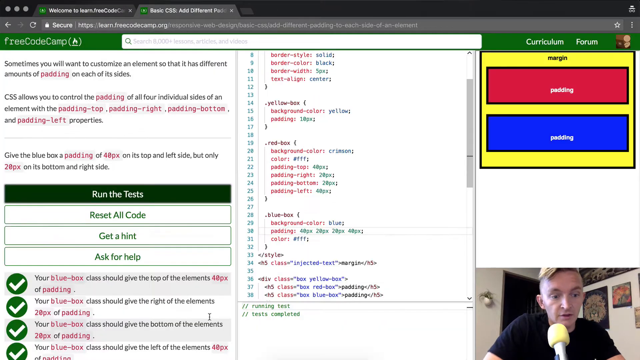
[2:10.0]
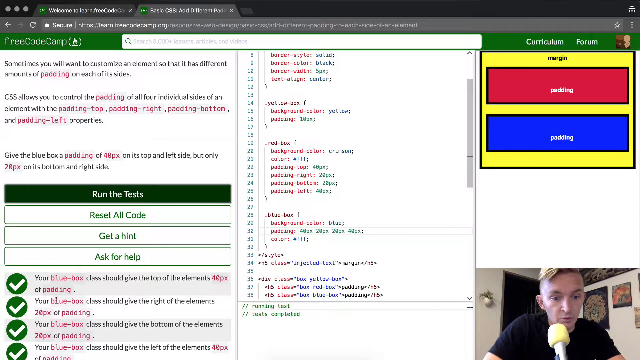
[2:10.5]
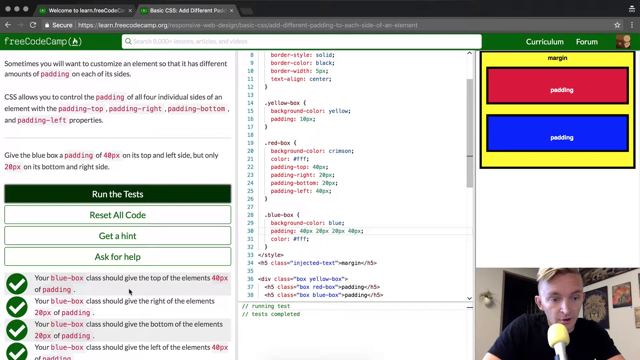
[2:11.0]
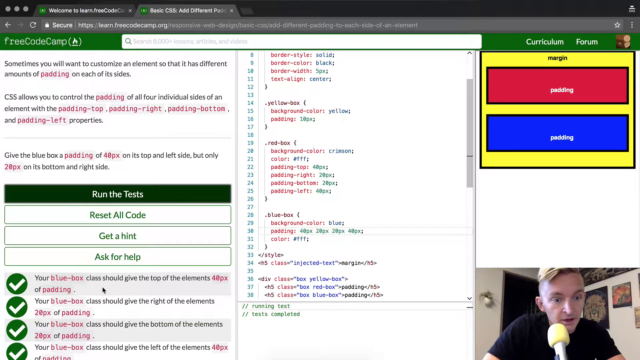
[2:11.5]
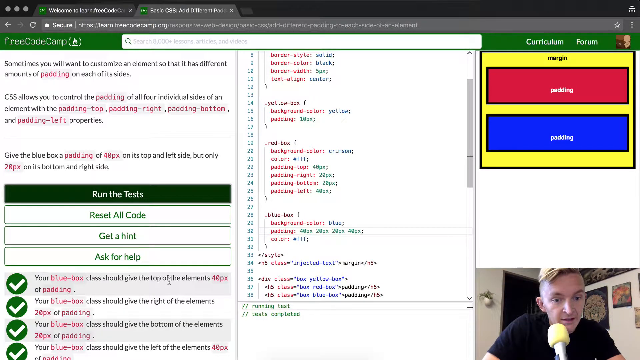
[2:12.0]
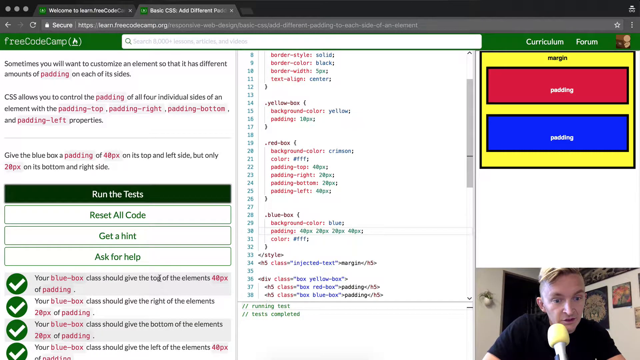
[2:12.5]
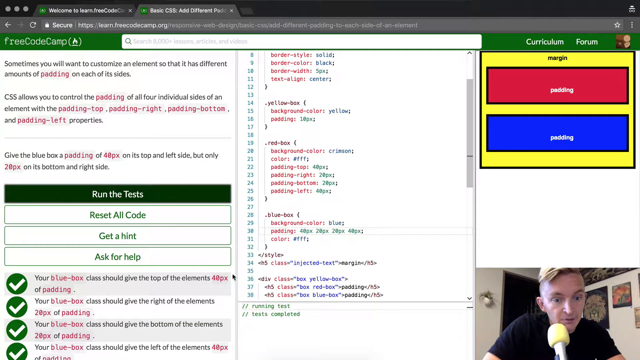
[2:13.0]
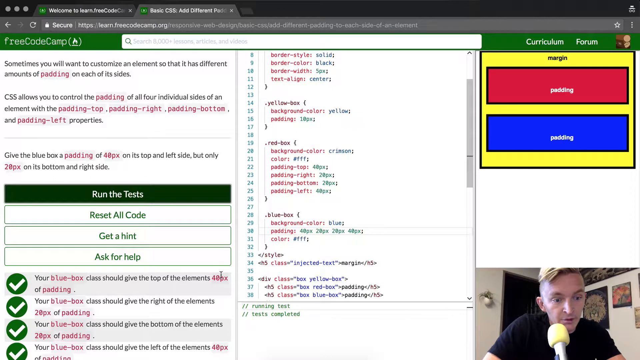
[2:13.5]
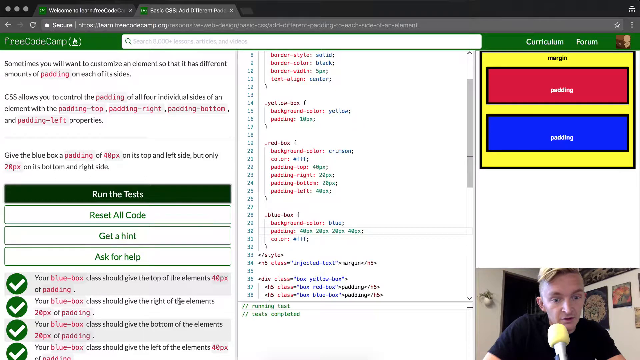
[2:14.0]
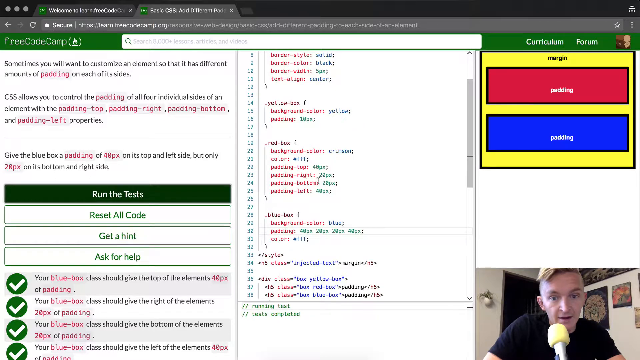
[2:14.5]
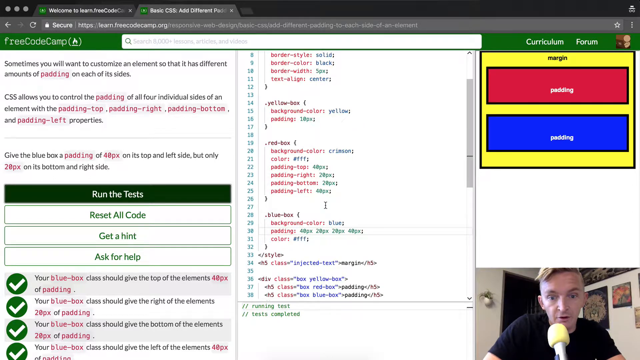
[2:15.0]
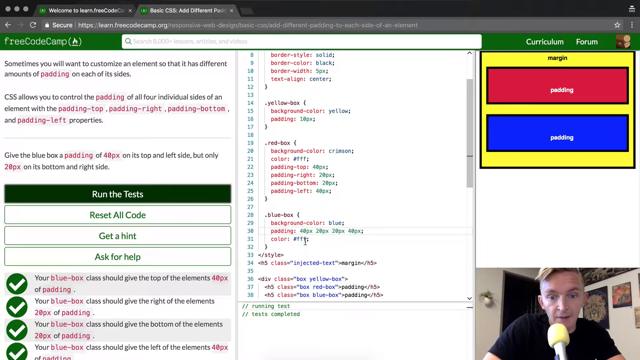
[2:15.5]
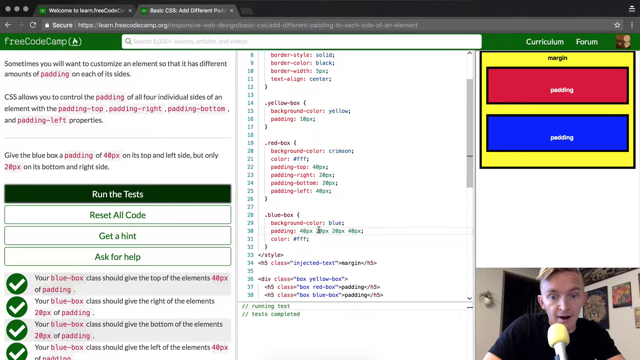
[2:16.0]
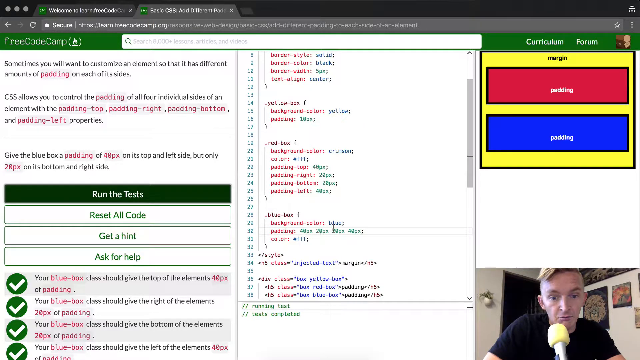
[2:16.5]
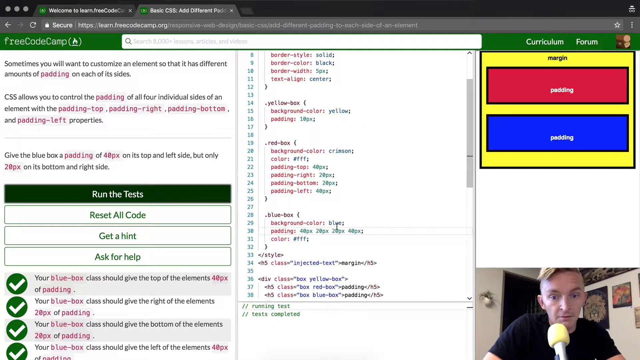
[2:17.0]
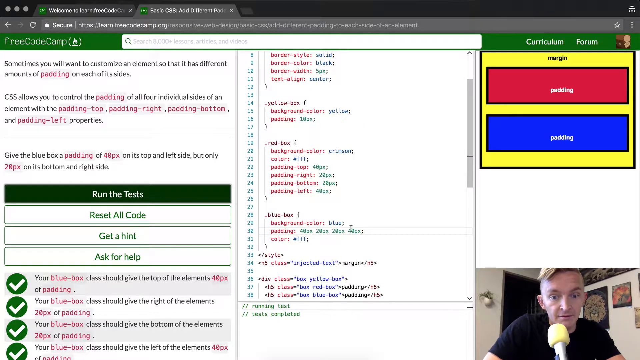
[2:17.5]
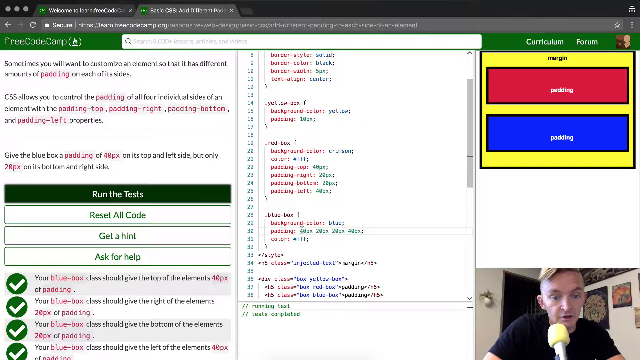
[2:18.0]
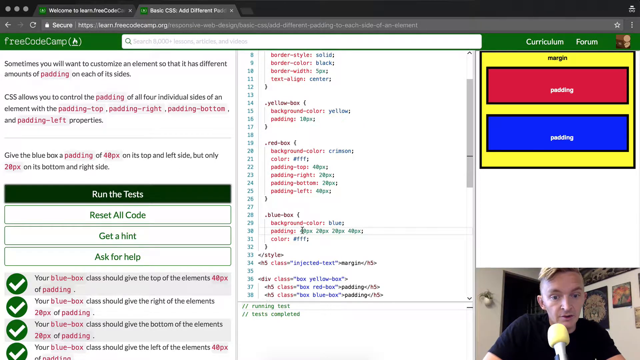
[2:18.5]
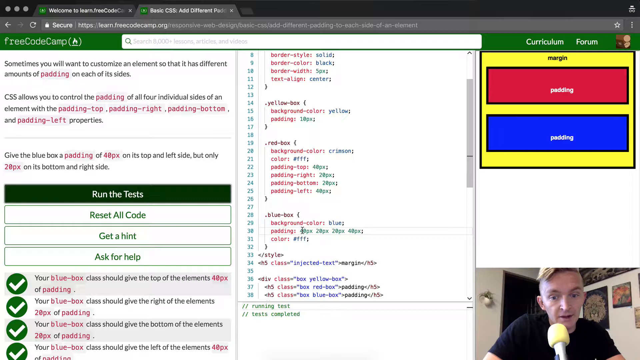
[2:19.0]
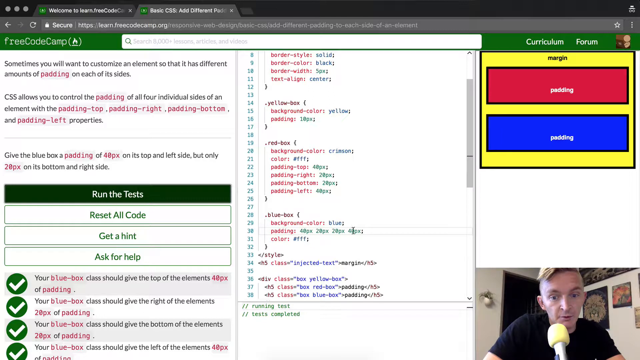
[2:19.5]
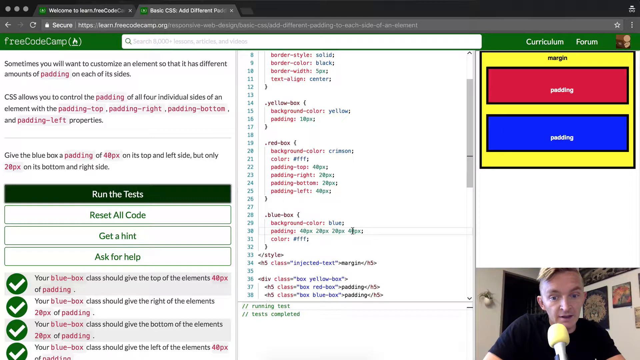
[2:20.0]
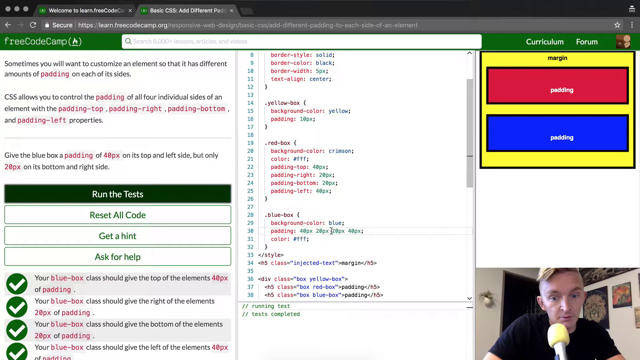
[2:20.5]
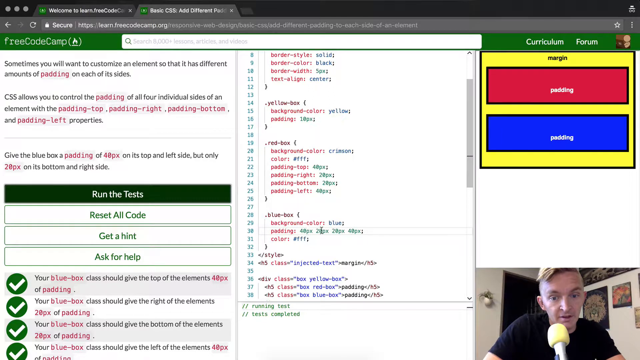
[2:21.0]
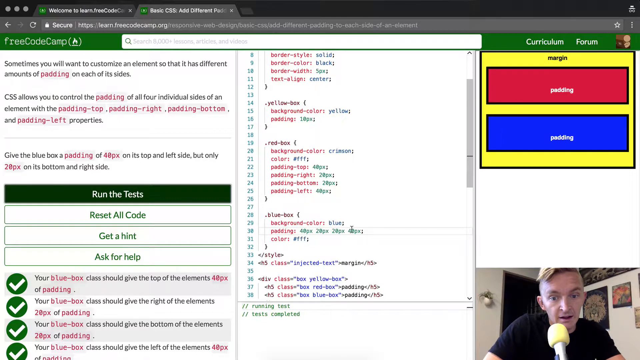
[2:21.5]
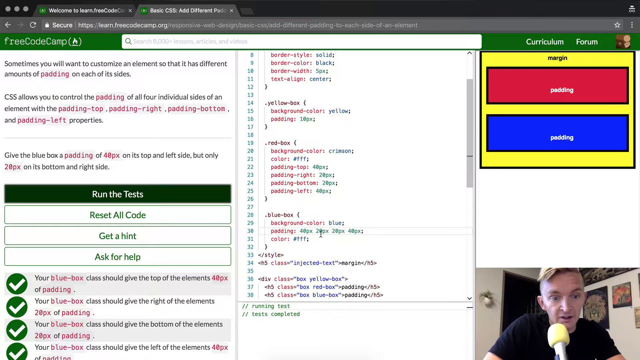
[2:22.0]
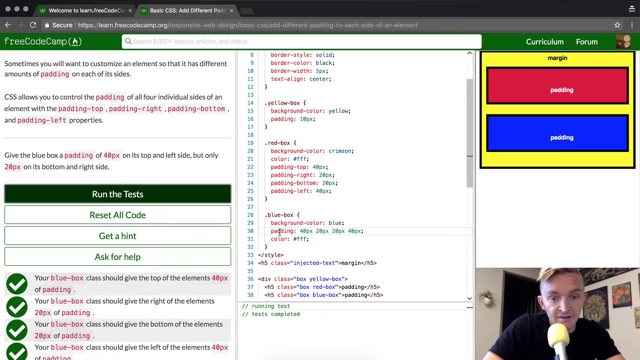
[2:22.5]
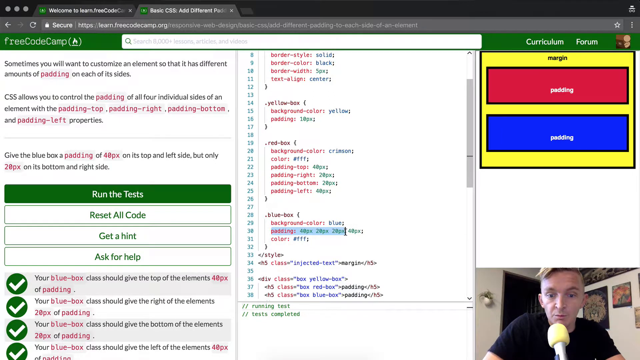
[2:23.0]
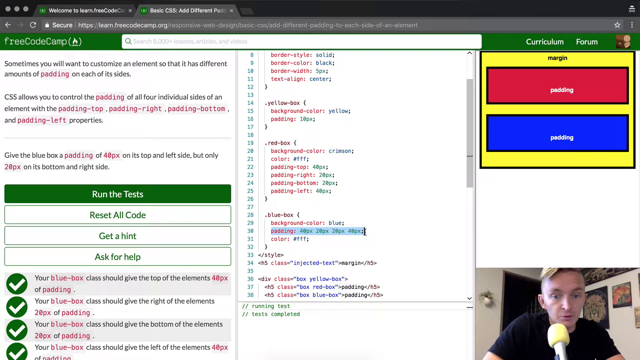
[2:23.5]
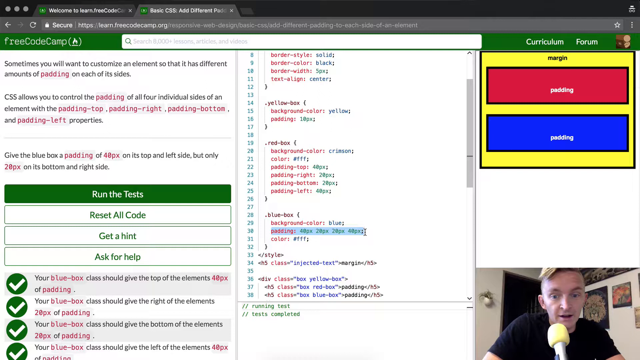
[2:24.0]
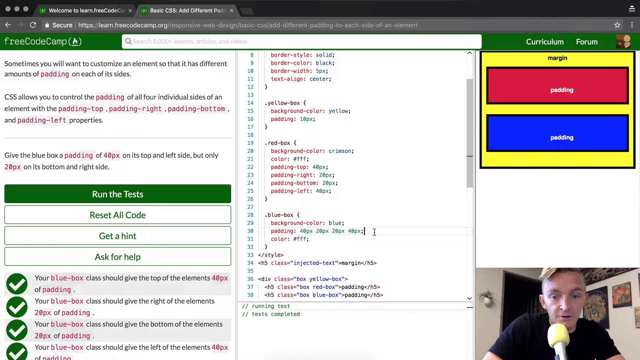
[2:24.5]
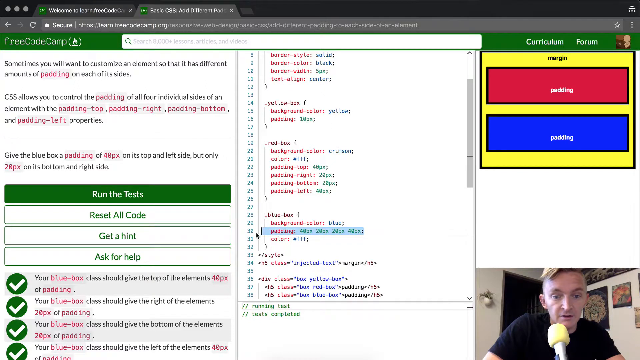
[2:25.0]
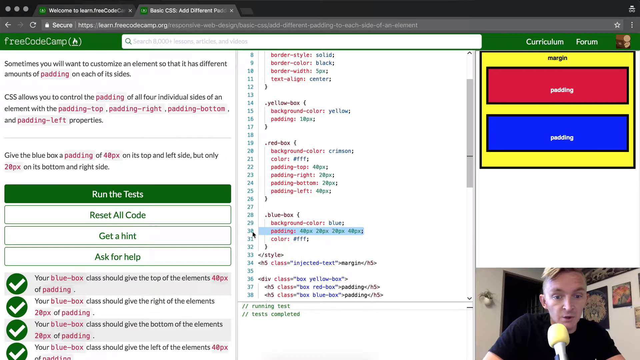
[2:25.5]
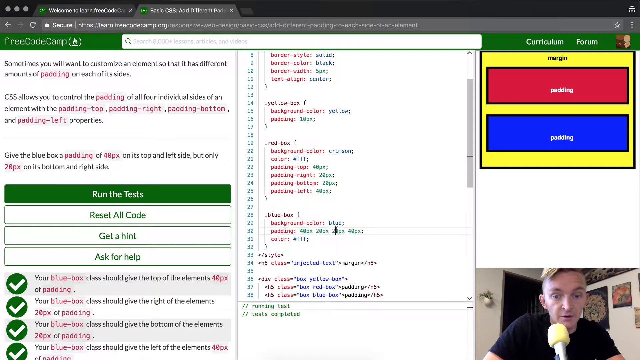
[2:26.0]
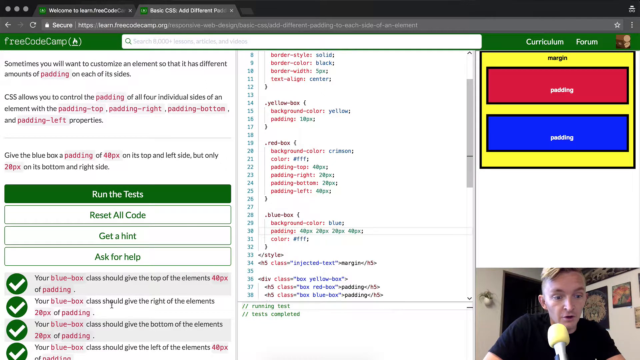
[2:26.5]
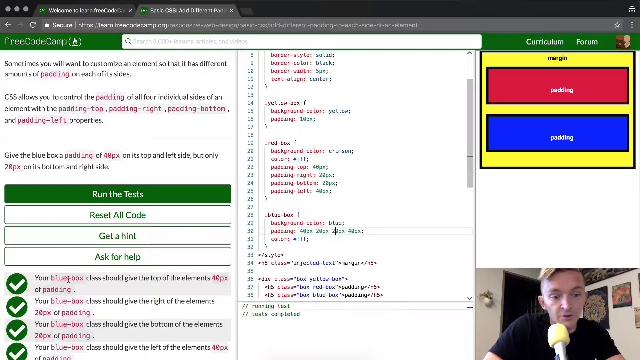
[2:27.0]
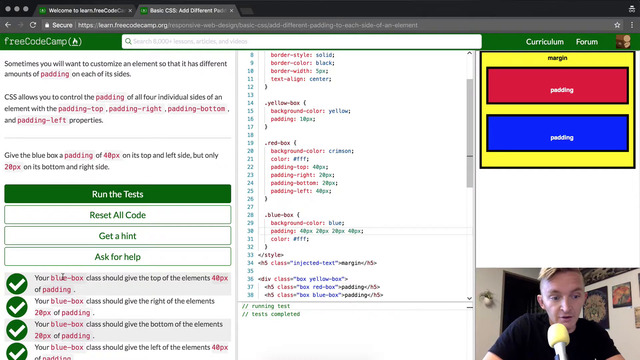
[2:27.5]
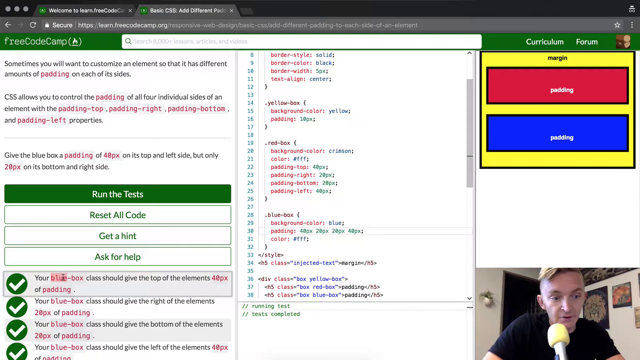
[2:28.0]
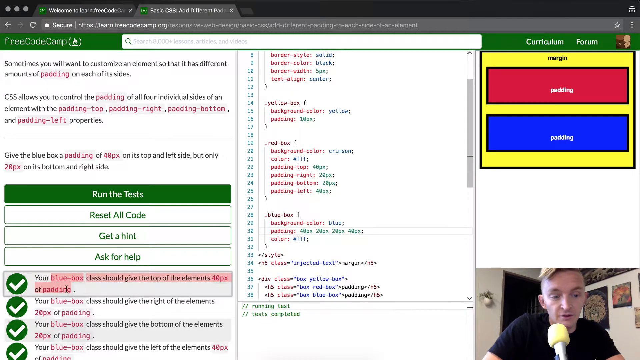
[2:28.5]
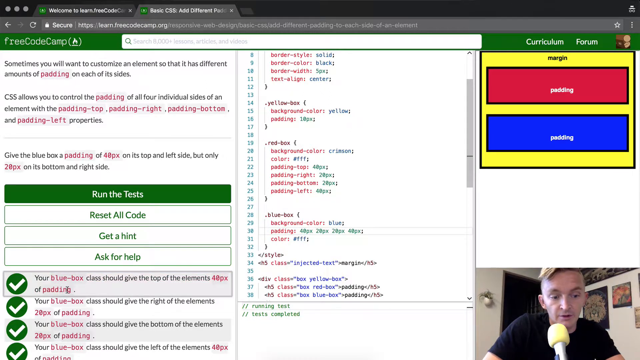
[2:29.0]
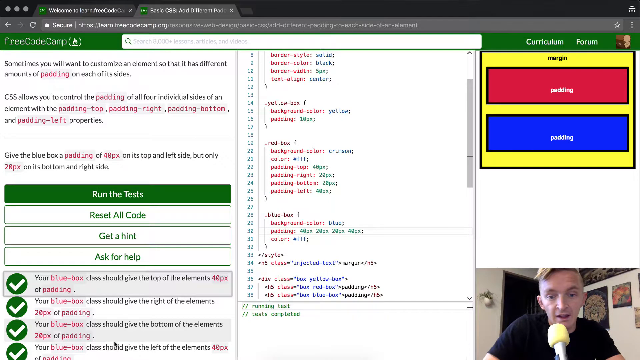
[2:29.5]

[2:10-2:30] Four green check marks now appear by all of the requirements, and the instructor holds his cursor over the description next to each check mark. His cursor then moves over some of the parameters in the code, back and forth, and returns to the check marks, highlighting the different sections. His head is tilted and his eyes are wide. He does not move his hands much, tilting his head and gesturing mostly with the mouse and cursor; in the video at the bottom of the screen his hands are rarely visible, mostly just his face and facial expressions.